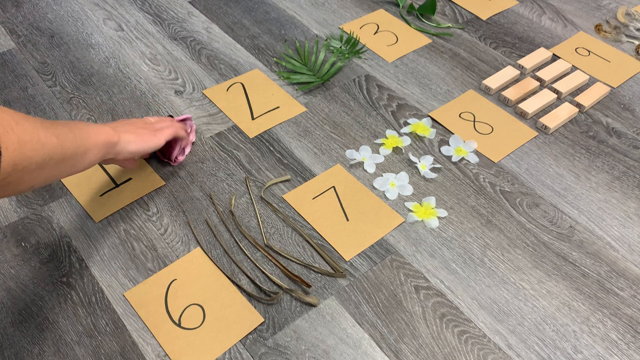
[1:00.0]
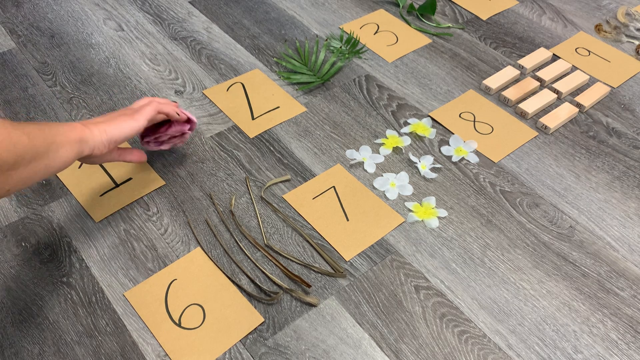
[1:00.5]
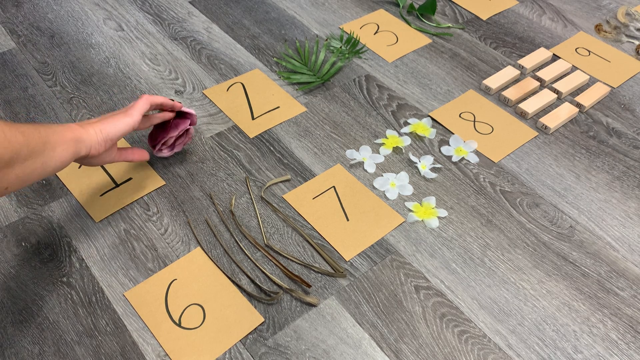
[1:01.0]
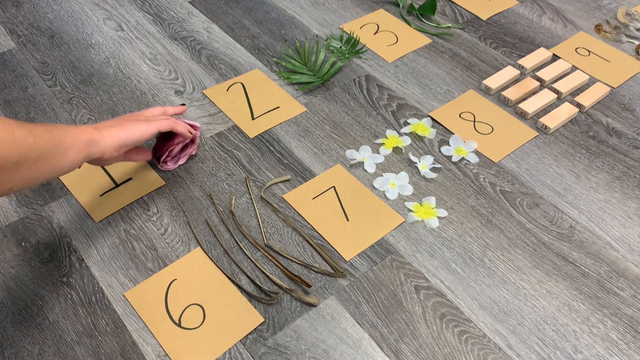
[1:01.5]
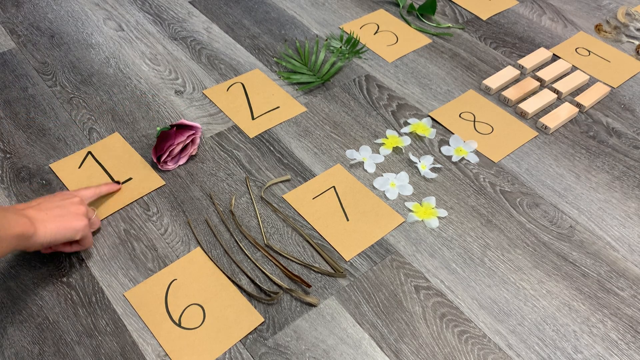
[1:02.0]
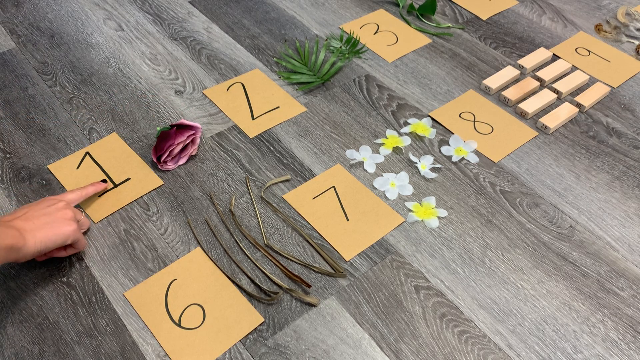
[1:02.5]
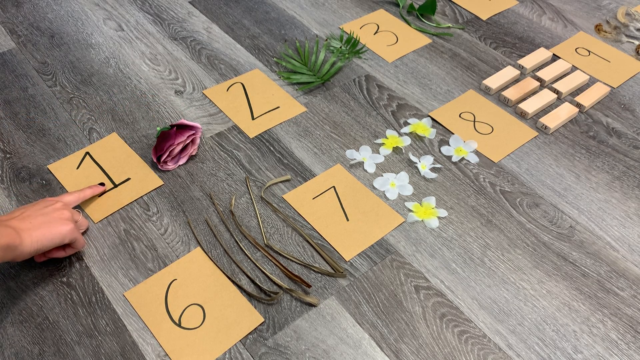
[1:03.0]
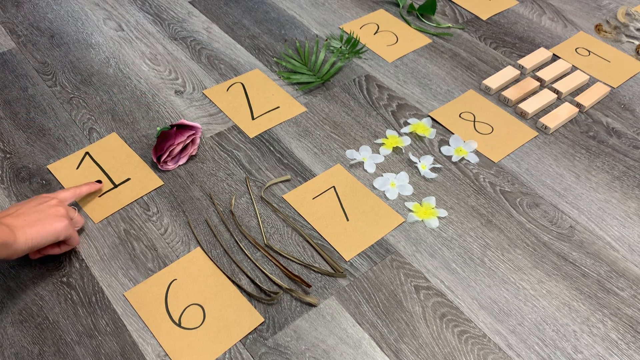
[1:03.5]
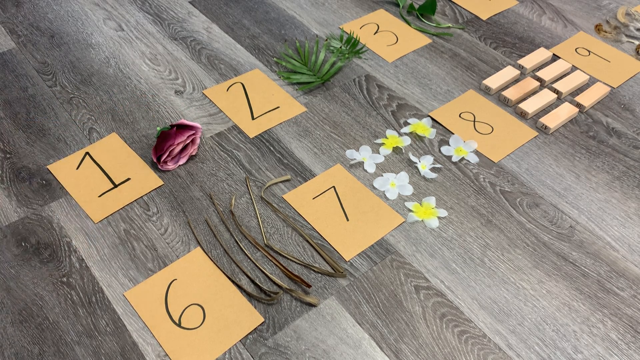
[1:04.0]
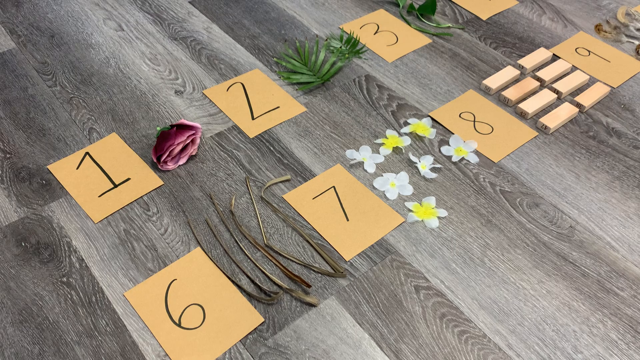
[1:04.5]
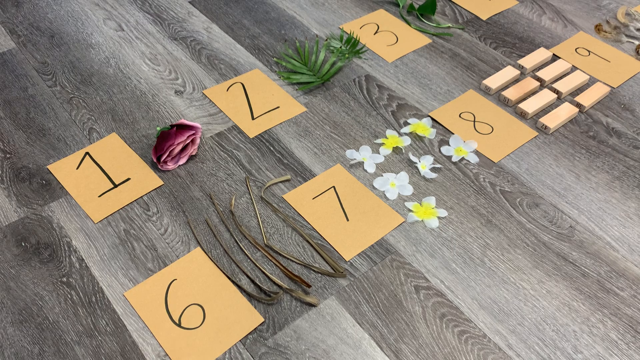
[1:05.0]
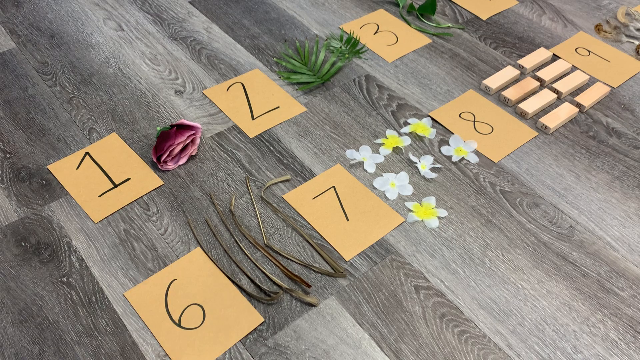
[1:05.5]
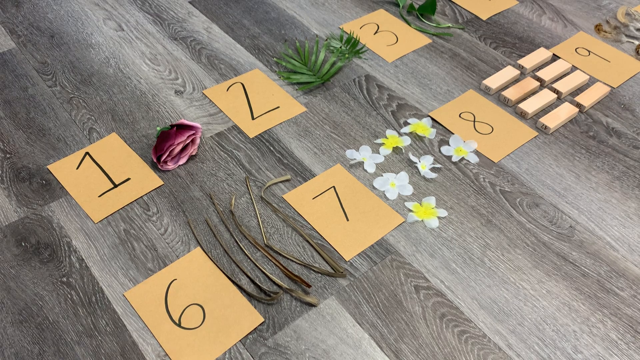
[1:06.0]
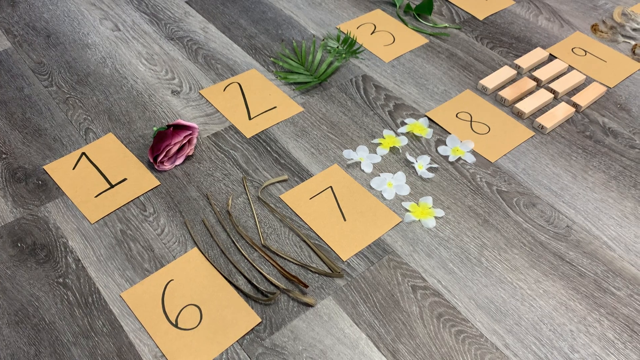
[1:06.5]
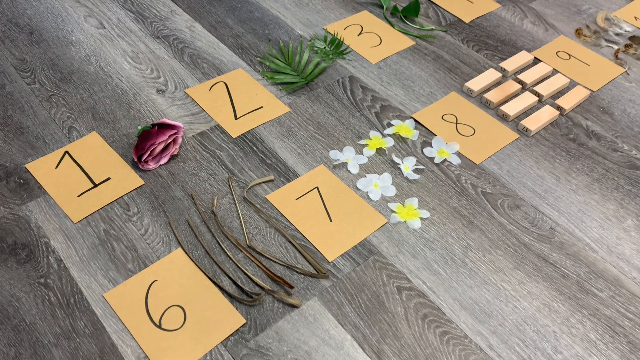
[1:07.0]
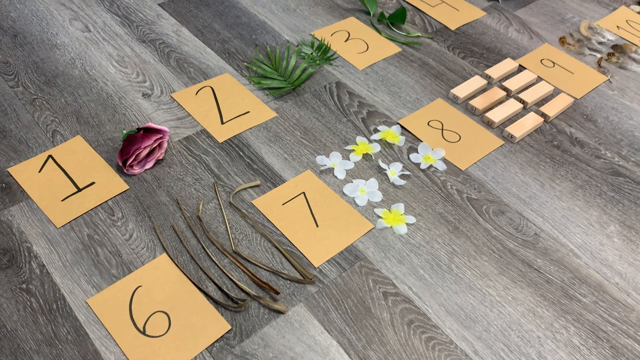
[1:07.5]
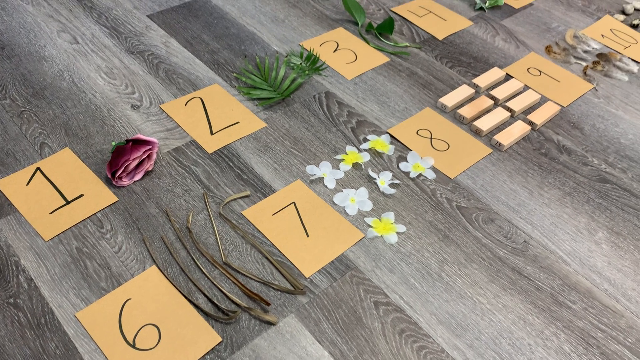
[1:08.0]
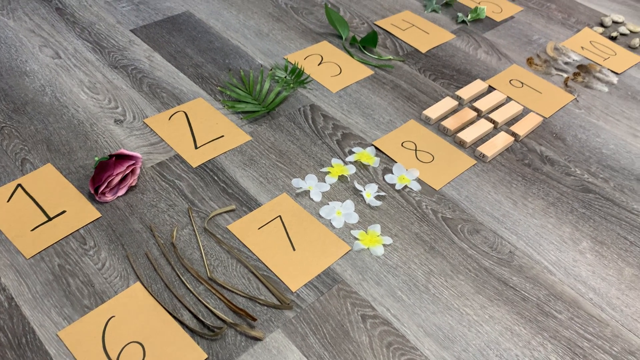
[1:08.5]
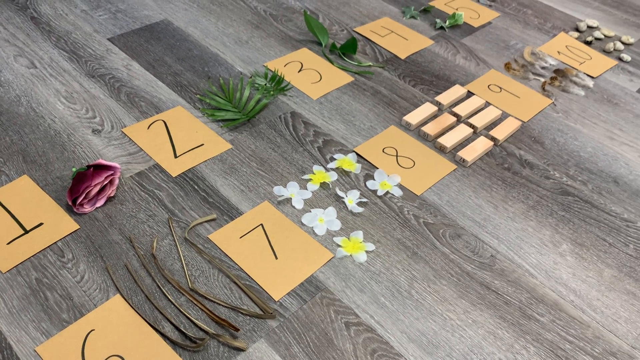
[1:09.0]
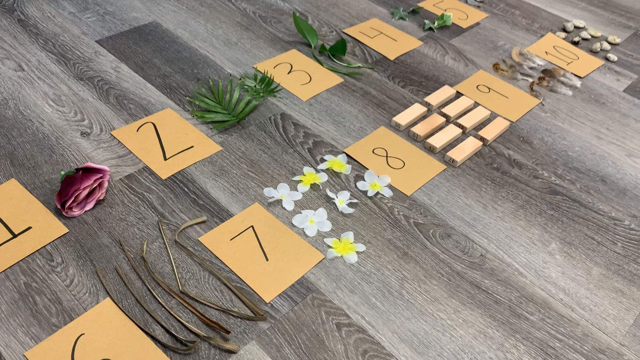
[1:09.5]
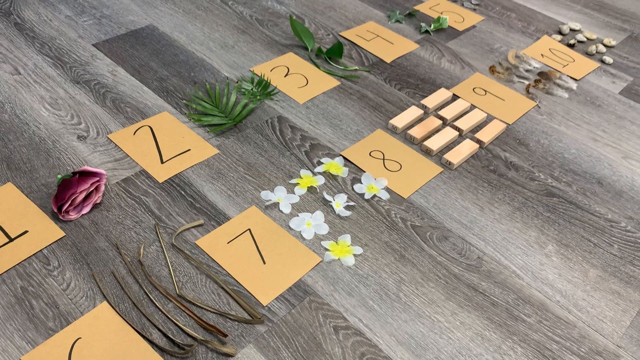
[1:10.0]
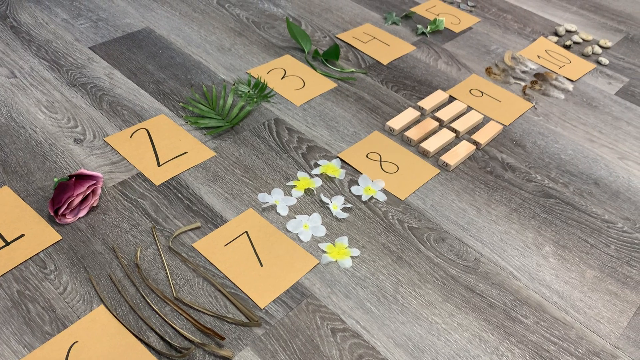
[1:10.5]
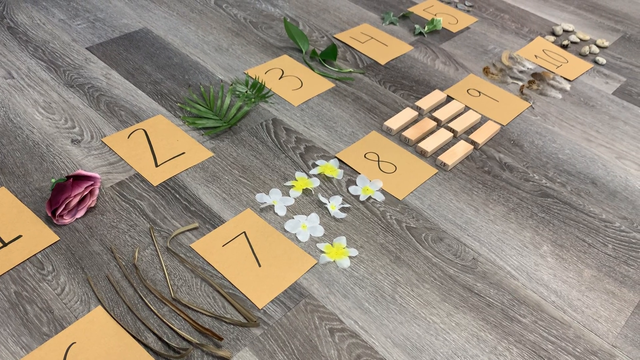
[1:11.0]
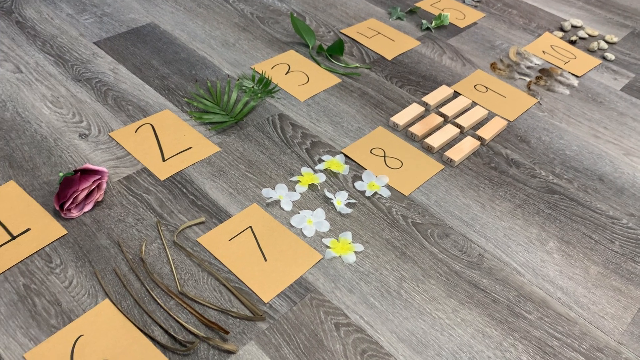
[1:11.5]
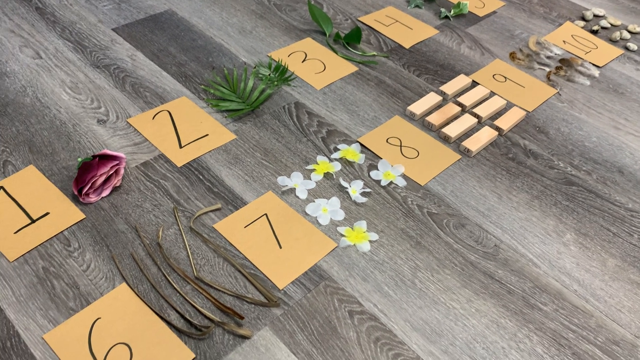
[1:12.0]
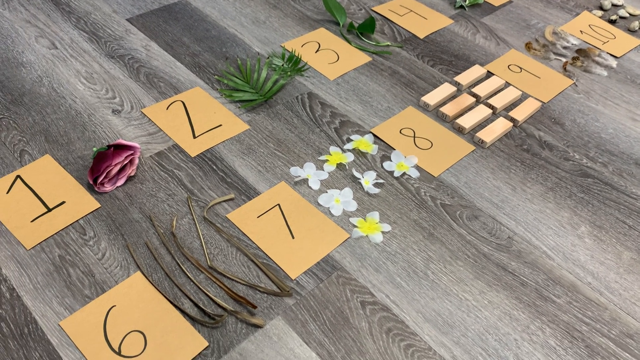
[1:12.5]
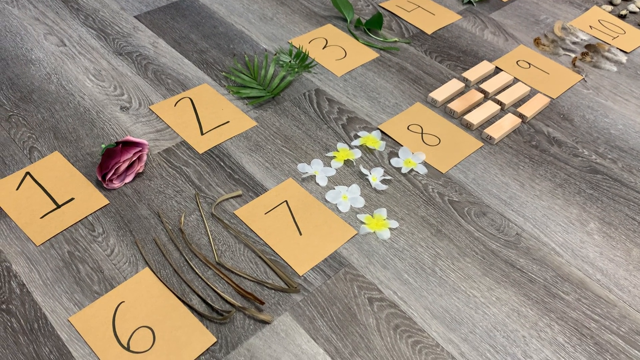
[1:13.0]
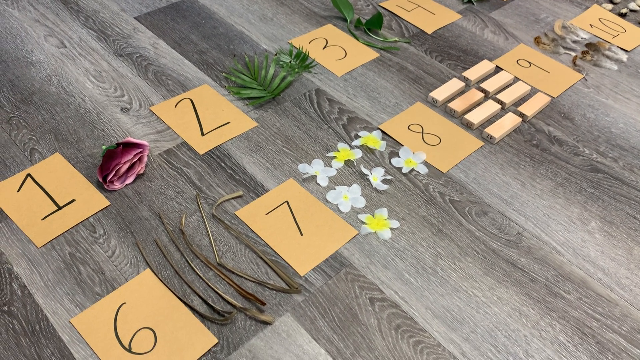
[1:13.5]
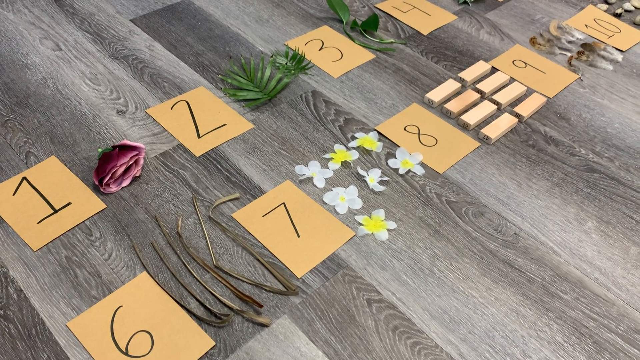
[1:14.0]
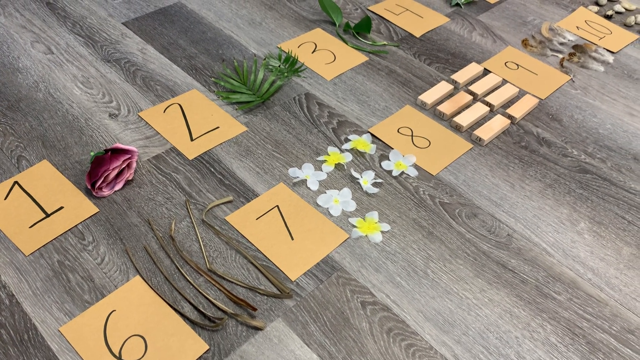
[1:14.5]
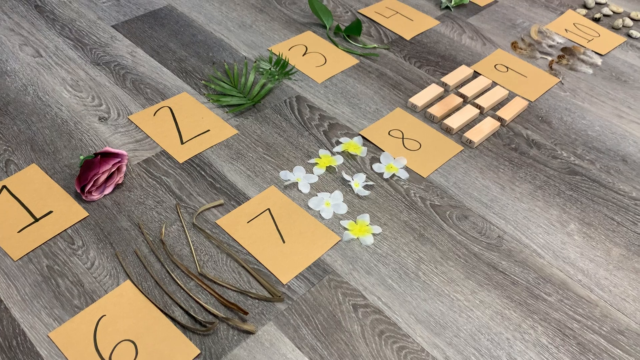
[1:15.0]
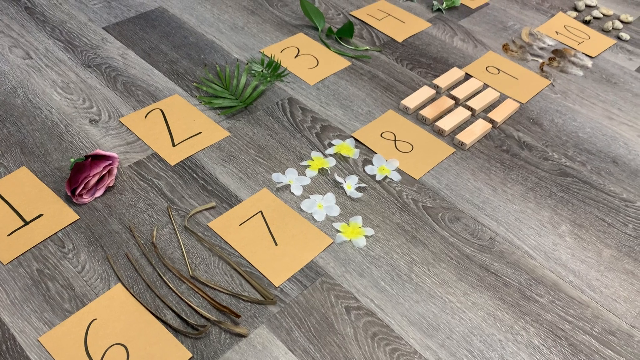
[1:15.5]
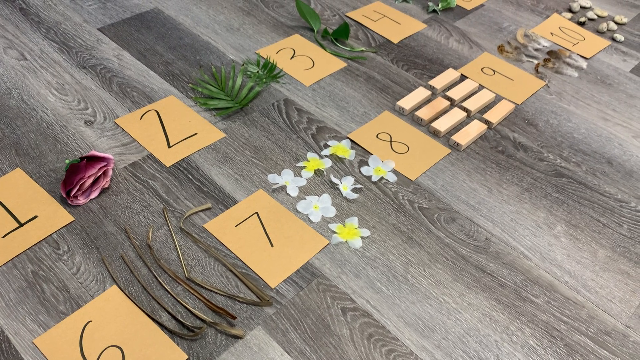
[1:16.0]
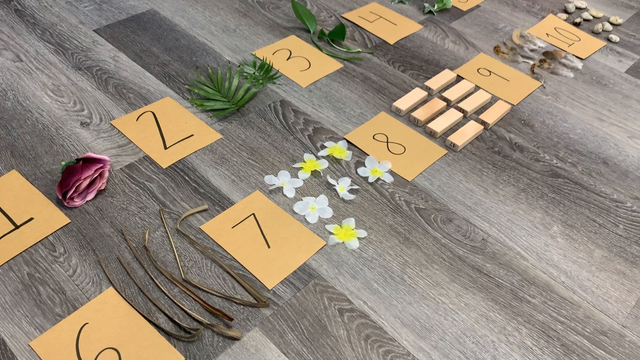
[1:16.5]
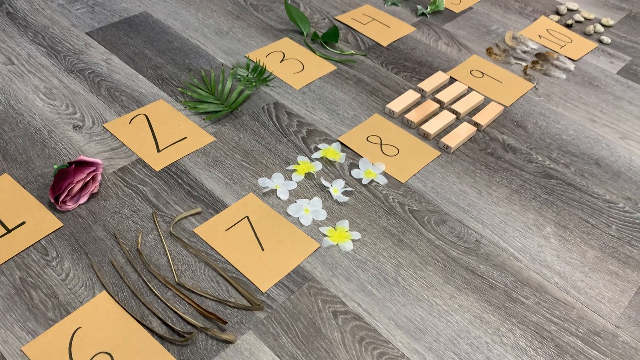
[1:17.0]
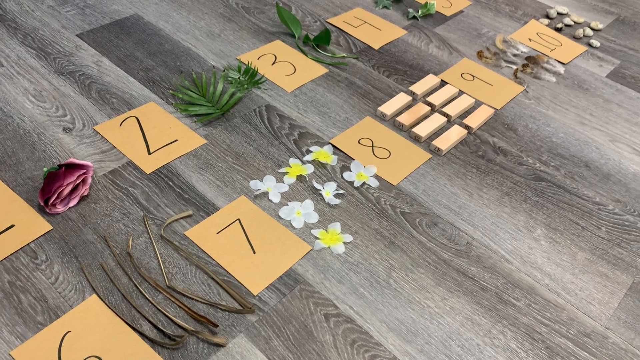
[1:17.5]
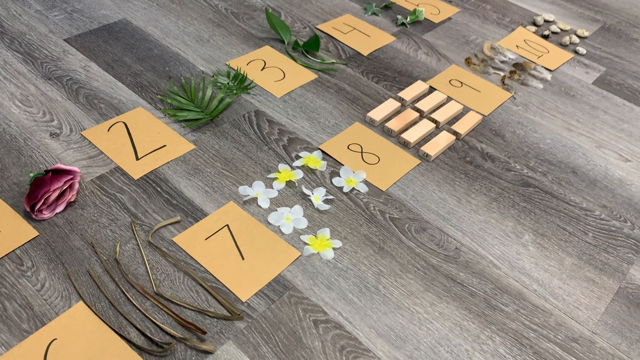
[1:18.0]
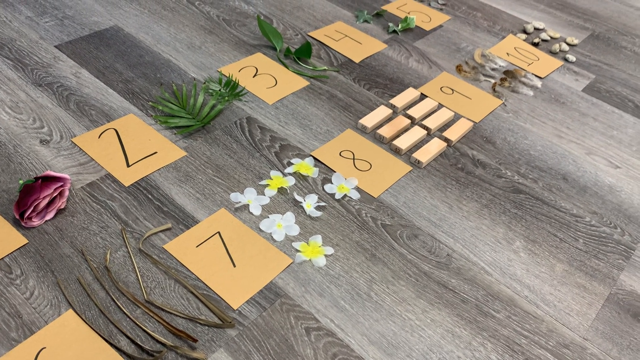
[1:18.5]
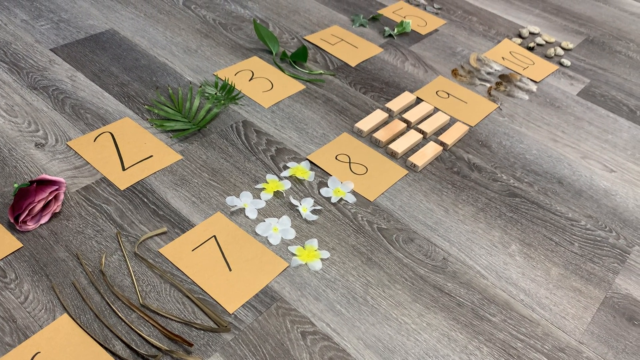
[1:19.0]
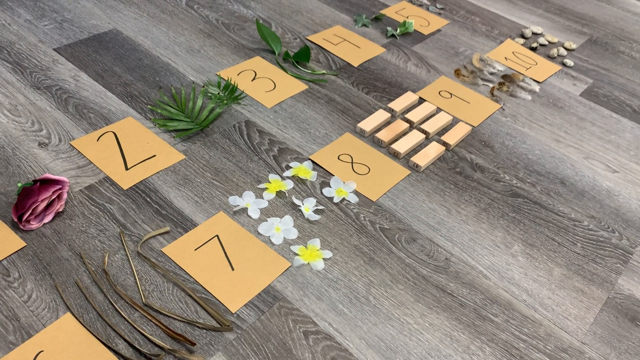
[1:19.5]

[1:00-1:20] The hand briefly picks up the dusky rose next to card 1, holding it between the fingers by one of the petals, and puts it back down. The person wears black nail polish and a ring. After putting the rose down, the hand points to card 1, placing a finger on it and tapping it. The camera then pans right, bringing cards 3, 4, 5 and 10 into view along with the items next to cards 9 and 10. Next to card 10 there appear to be ten stones. The frame moves back and forth from left to right, making it hard to focus on individual items. The items next to card 5 cannot quite be seen, and the items next to card 9 are visible but hard to make out.